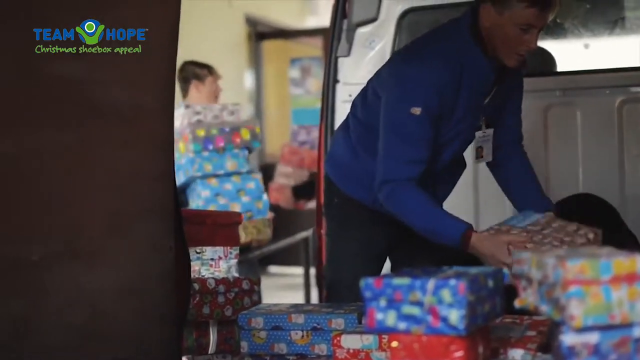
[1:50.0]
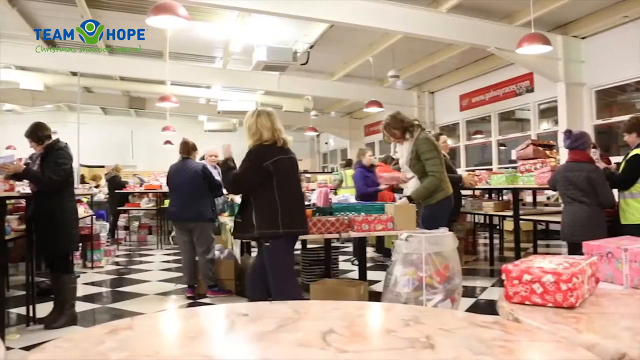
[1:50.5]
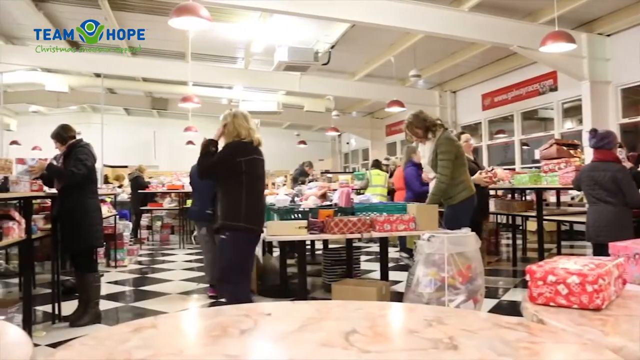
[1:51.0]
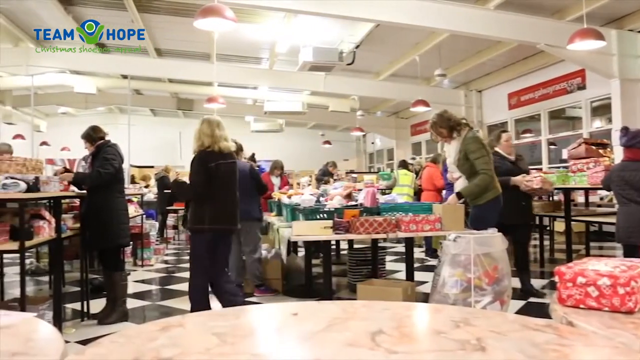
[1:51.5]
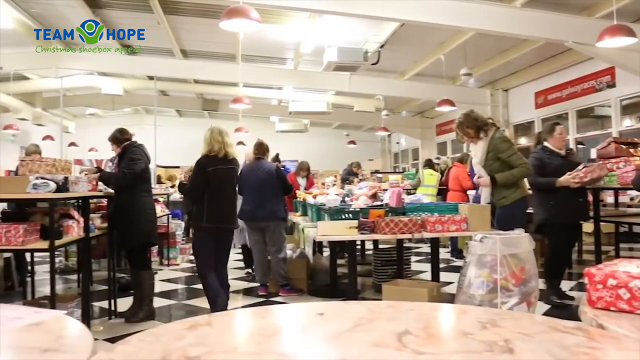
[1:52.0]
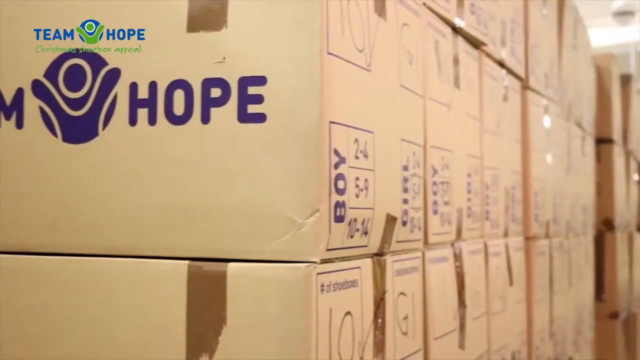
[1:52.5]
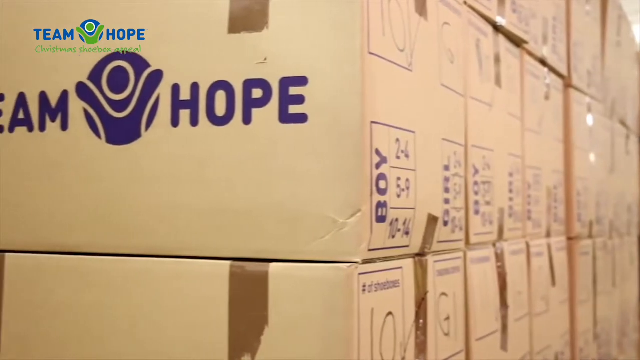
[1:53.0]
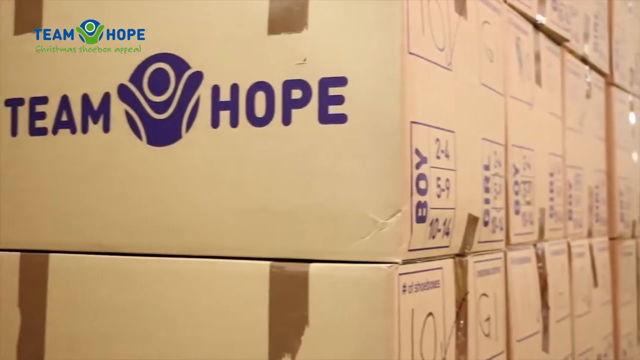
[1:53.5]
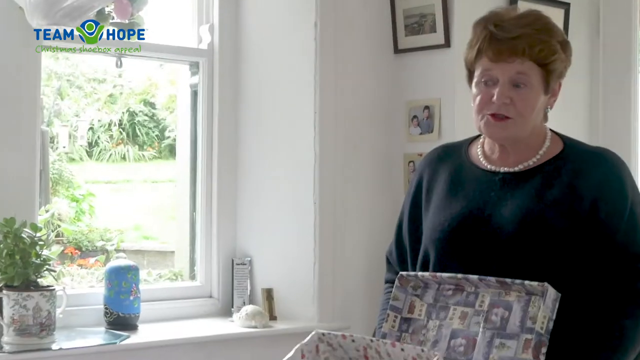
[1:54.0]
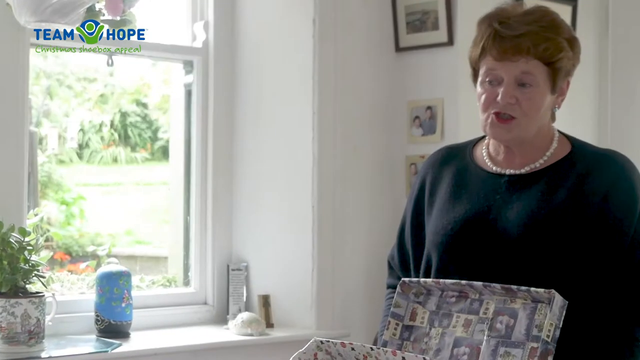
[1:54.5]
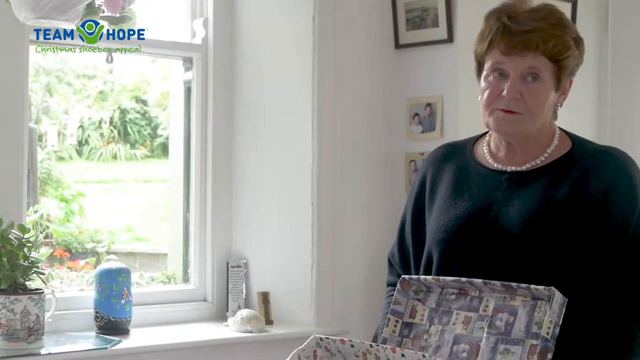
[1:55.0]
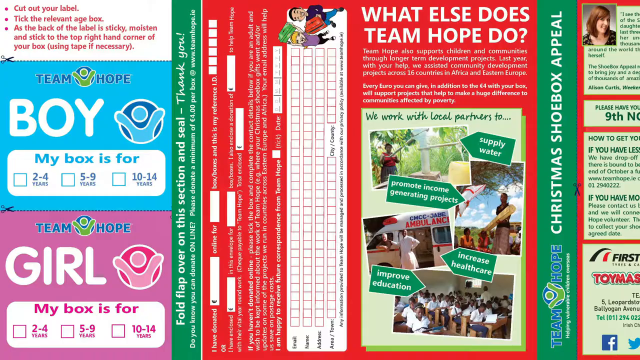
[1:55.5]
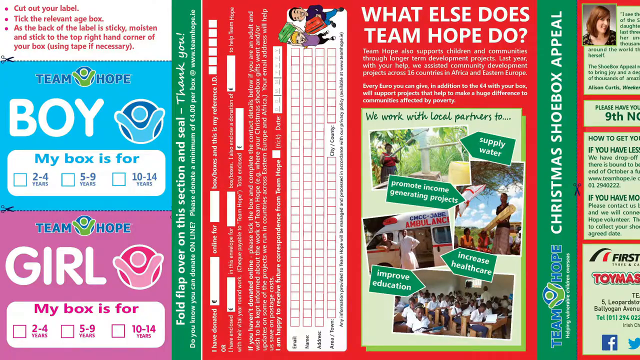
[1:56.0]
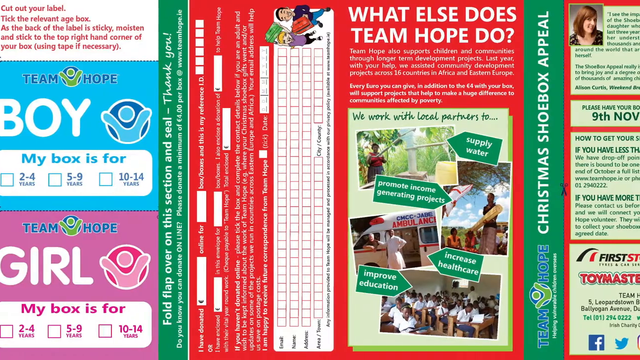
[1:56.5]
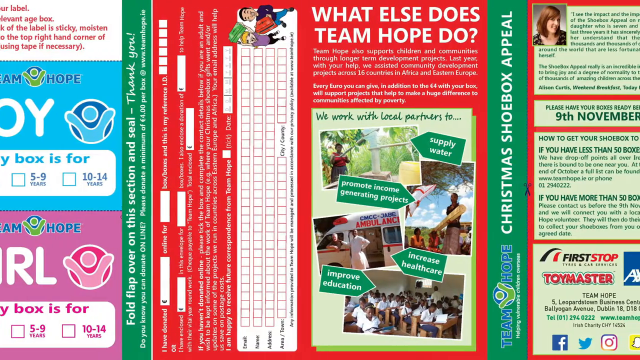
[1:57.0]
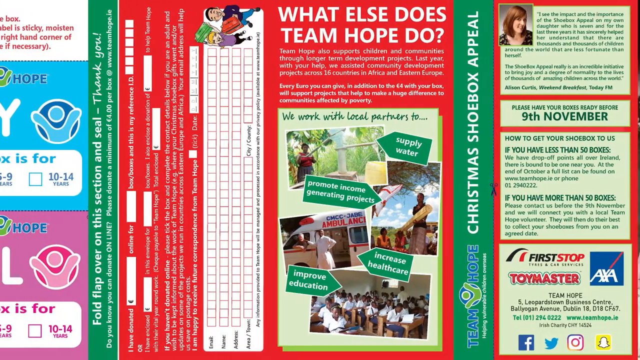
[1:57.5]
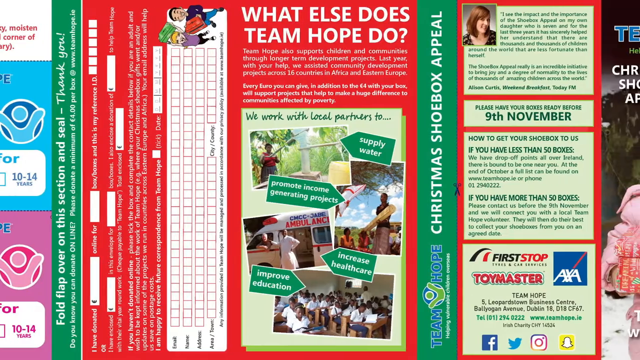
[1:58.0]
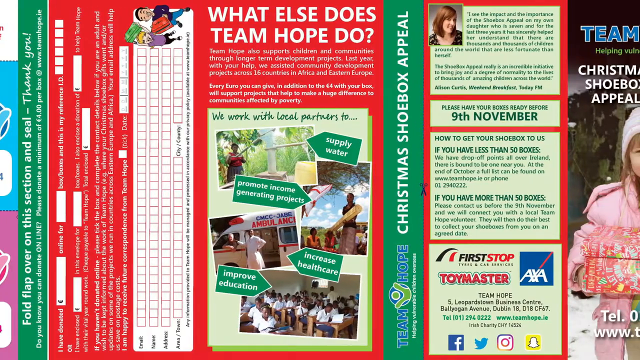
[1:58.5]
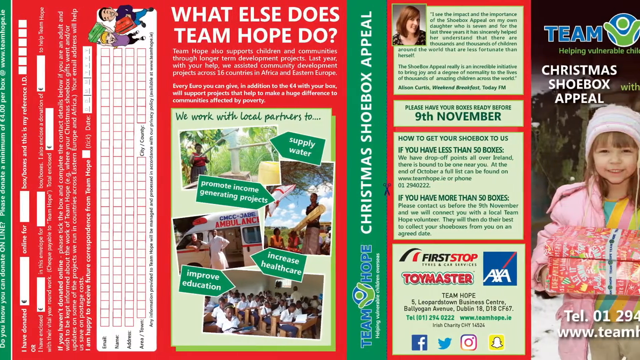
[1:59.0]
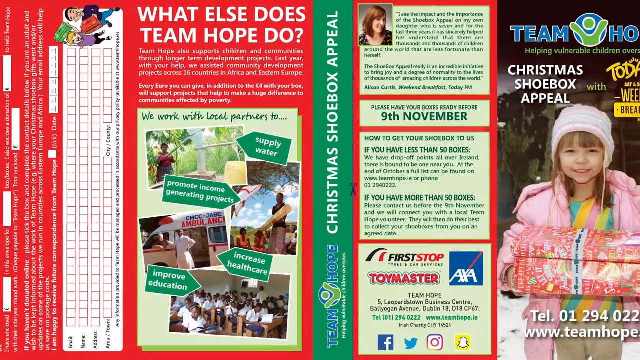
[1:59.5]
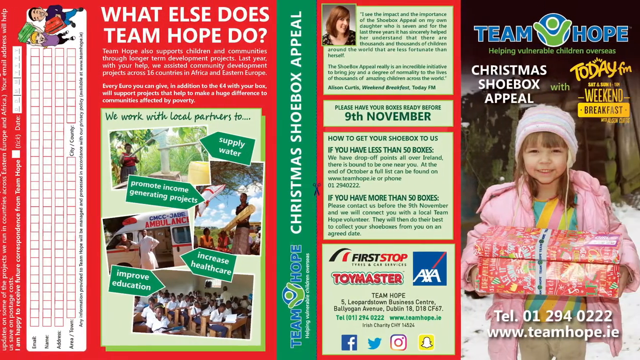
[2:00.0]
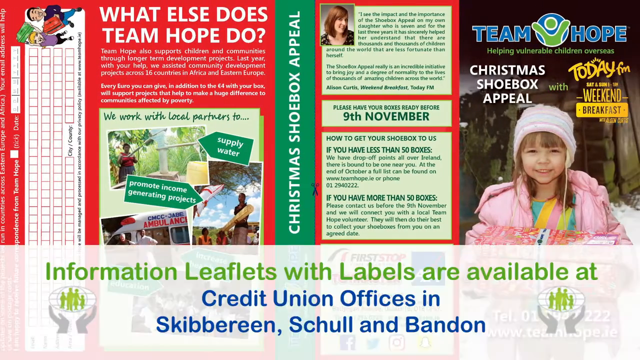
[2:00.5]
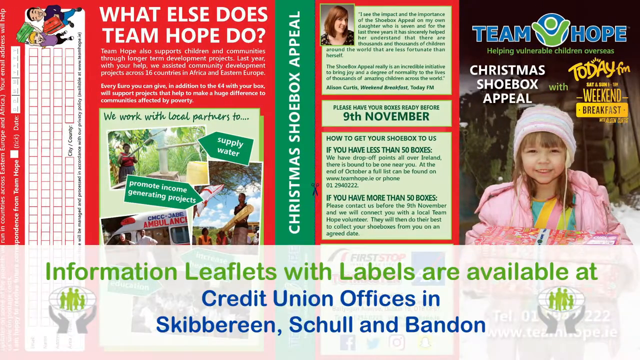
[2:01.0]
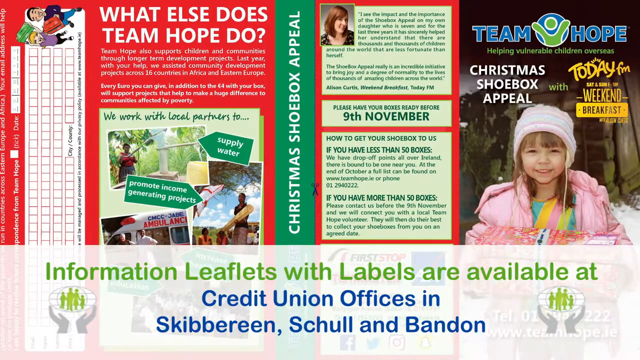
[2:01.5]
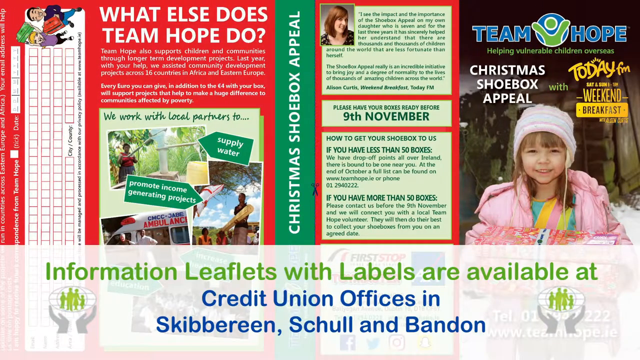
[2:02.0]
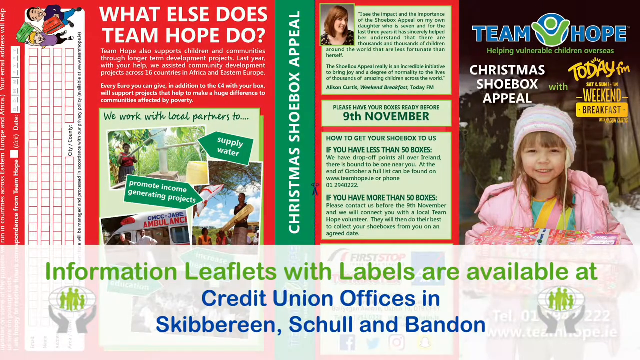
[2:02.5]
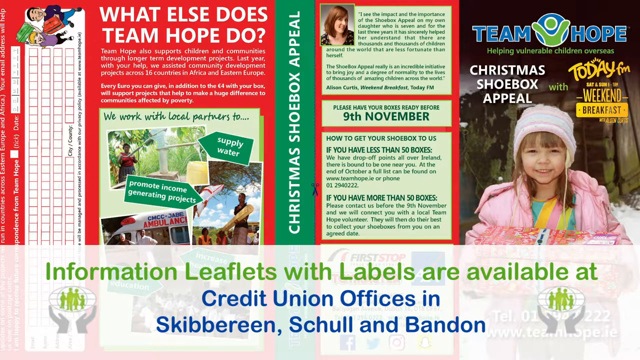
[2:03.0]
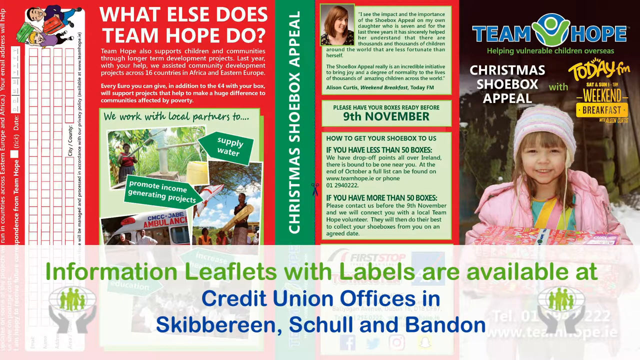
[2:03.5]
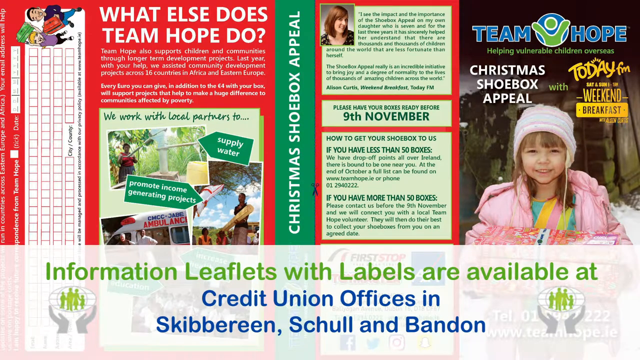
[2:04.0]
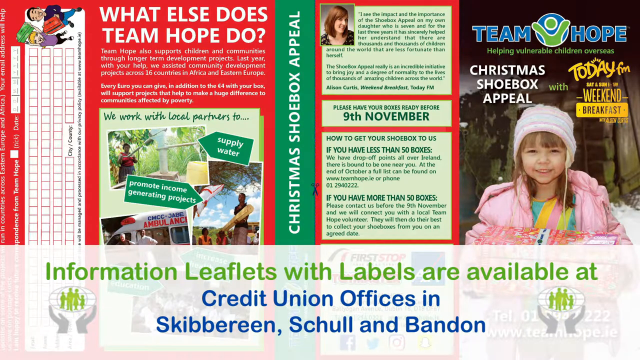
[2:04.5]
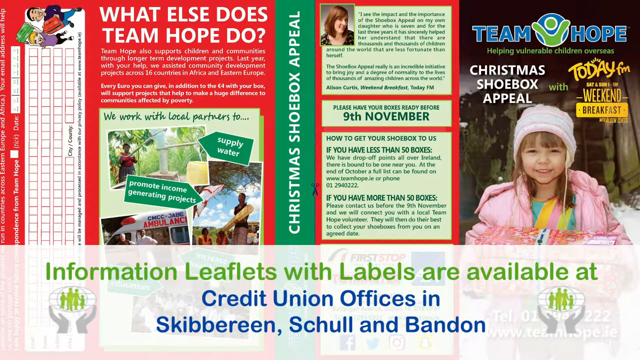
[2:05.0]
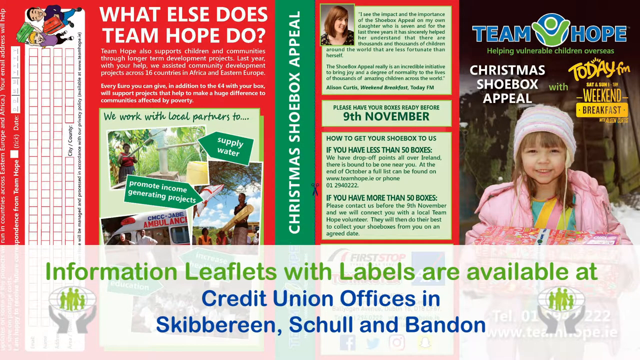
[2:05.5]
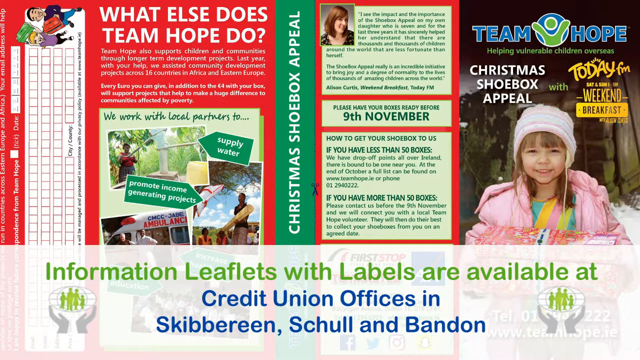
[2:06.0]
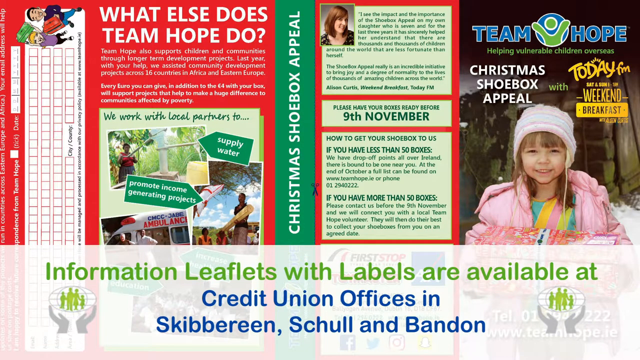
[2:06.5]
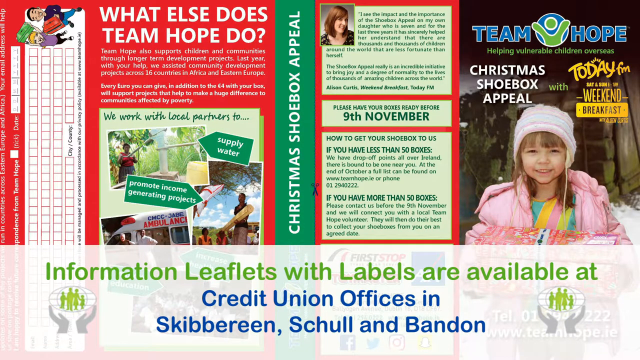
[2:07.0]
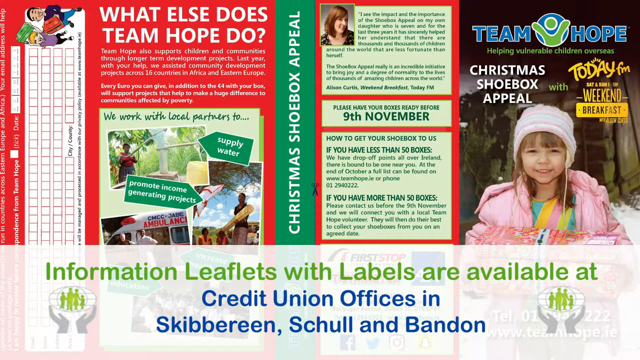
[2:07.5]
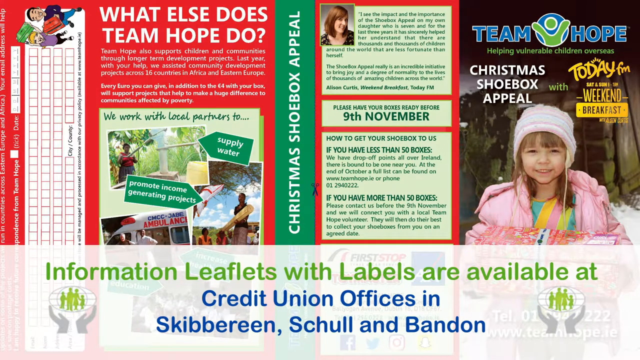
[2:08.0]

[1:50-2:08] Sally Daly of Team Hope Skibbereen stands at one end of her dining room table, staring at the camera. A graphic states "if you can give more we can do more to help the children year-round with educational and health issues." Volunteers package the shoeboxes and place them in large boxes, and a man loads the boxes onto a delivery van. The video ends with a shot of a leaflet from Team Hope.